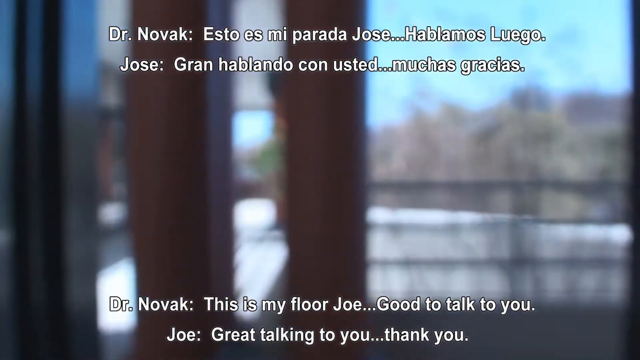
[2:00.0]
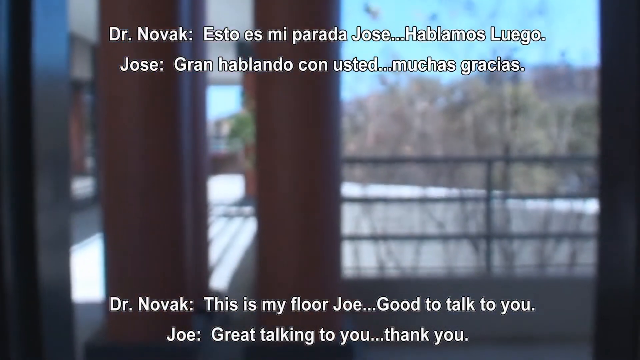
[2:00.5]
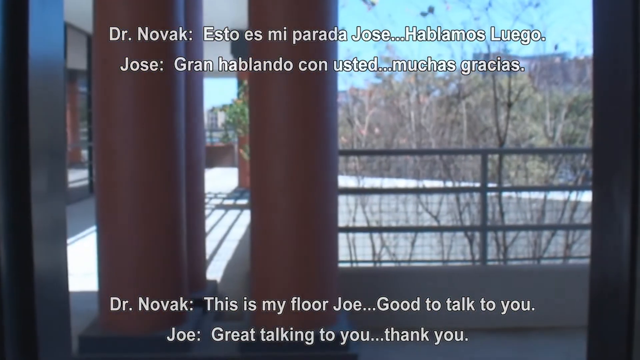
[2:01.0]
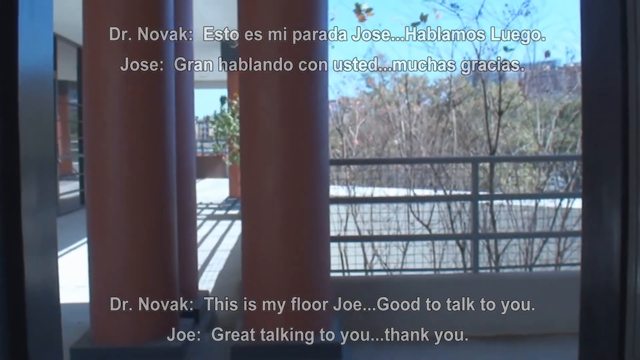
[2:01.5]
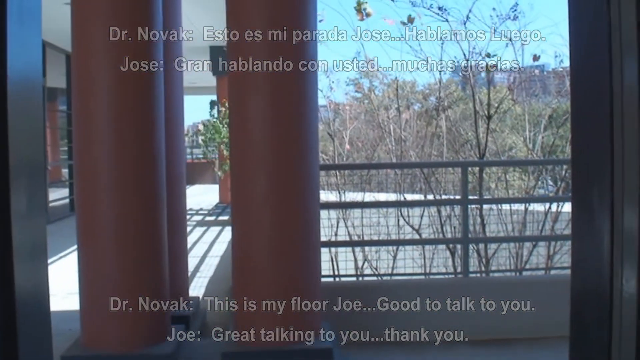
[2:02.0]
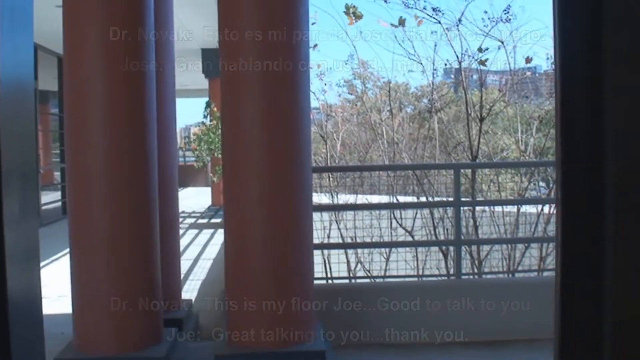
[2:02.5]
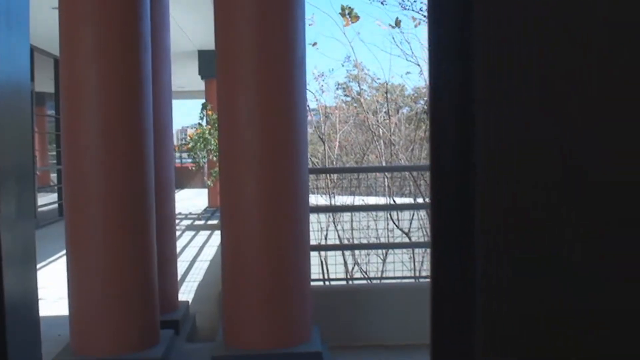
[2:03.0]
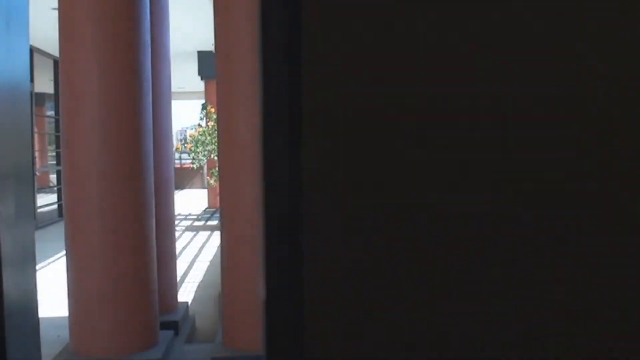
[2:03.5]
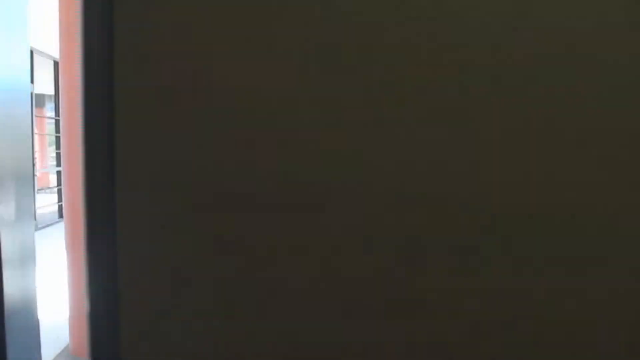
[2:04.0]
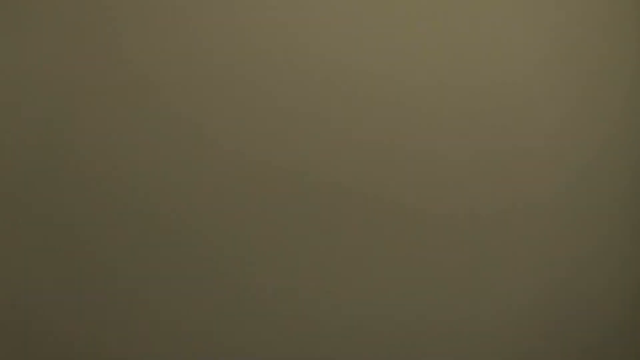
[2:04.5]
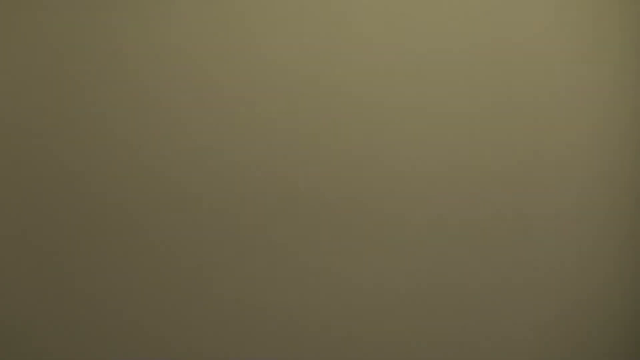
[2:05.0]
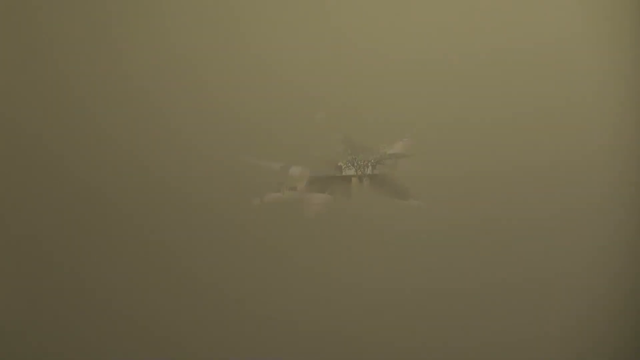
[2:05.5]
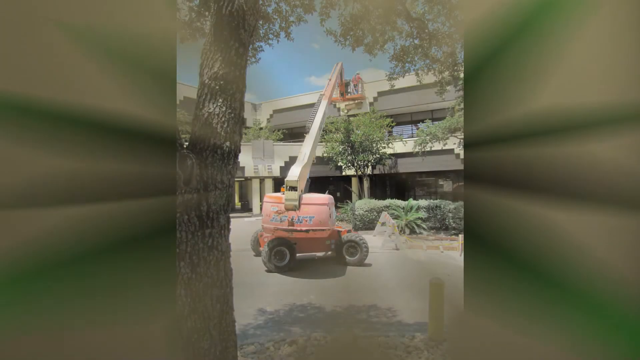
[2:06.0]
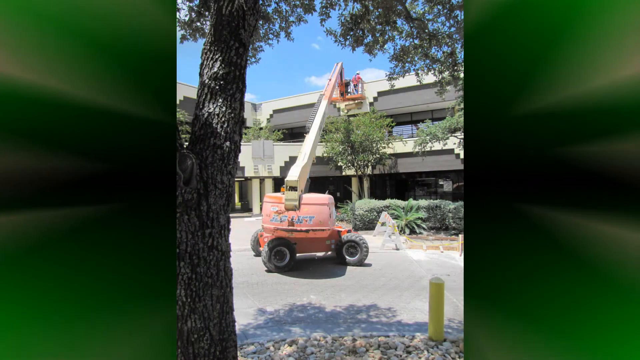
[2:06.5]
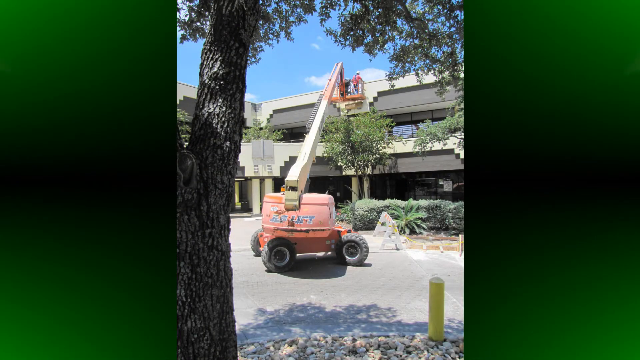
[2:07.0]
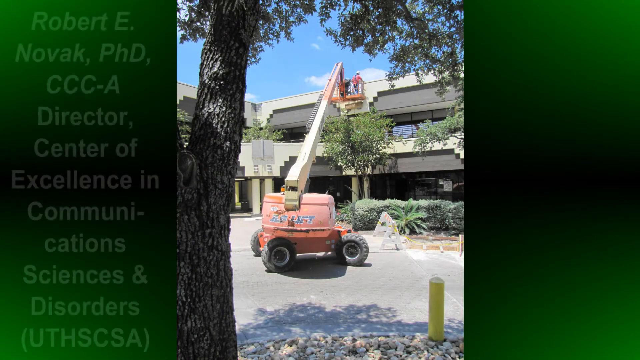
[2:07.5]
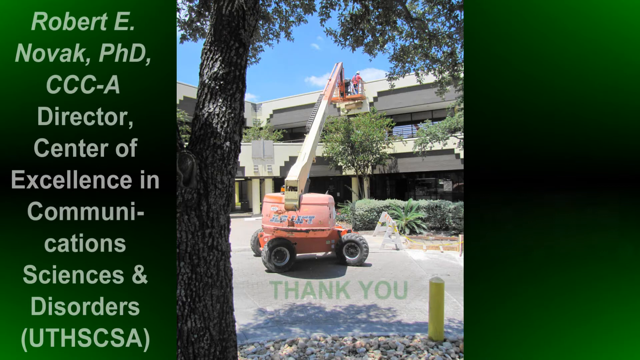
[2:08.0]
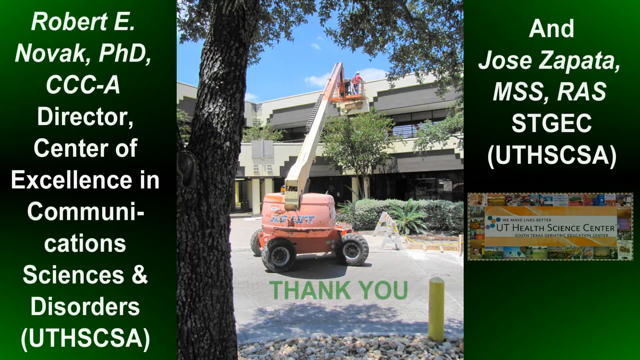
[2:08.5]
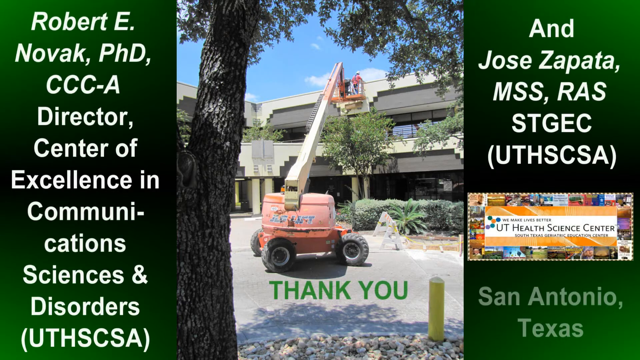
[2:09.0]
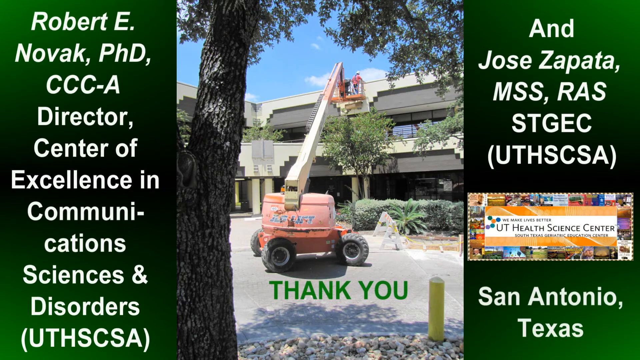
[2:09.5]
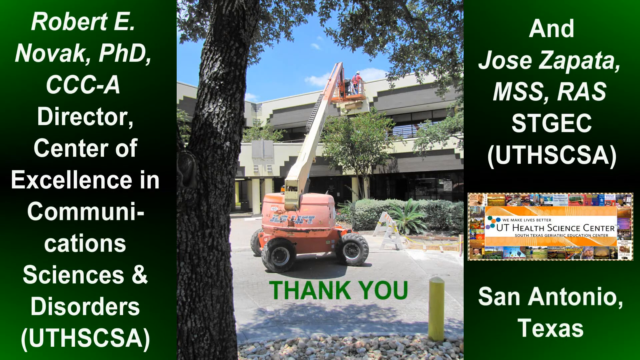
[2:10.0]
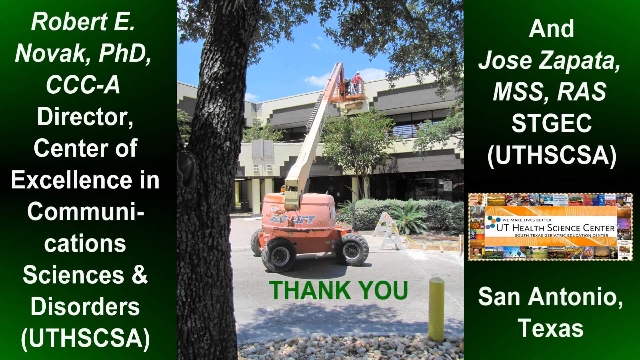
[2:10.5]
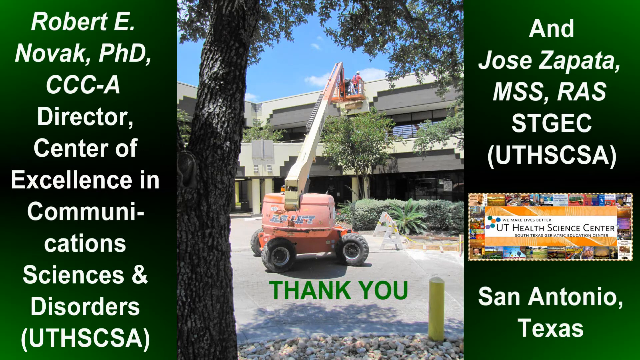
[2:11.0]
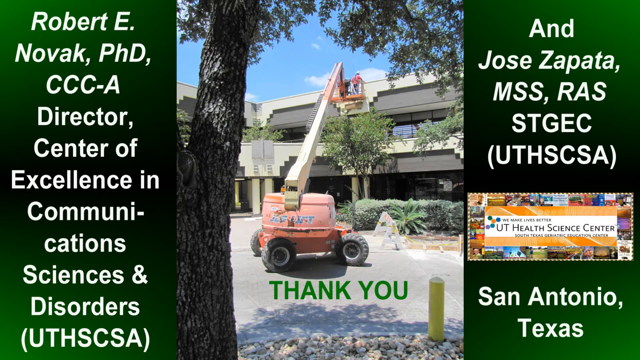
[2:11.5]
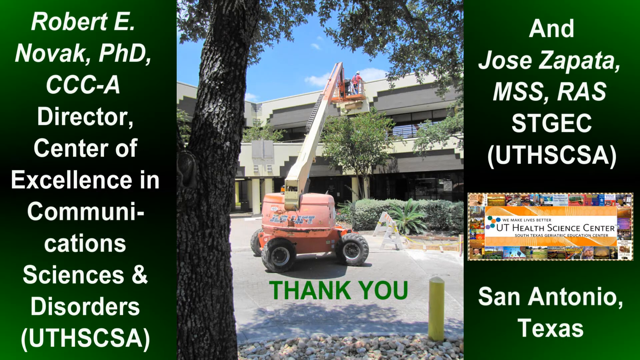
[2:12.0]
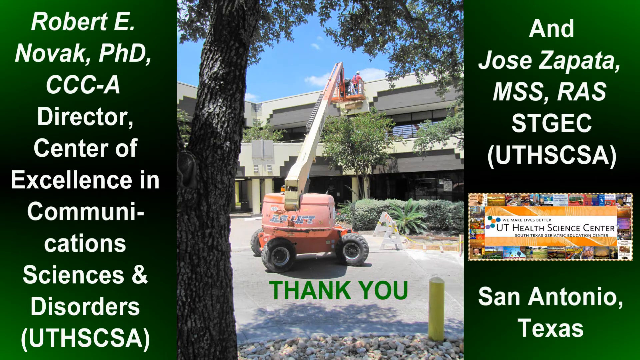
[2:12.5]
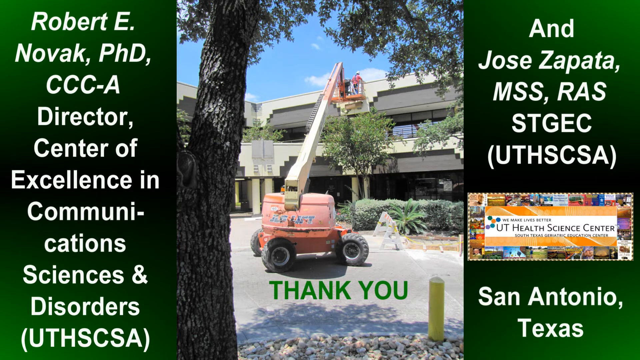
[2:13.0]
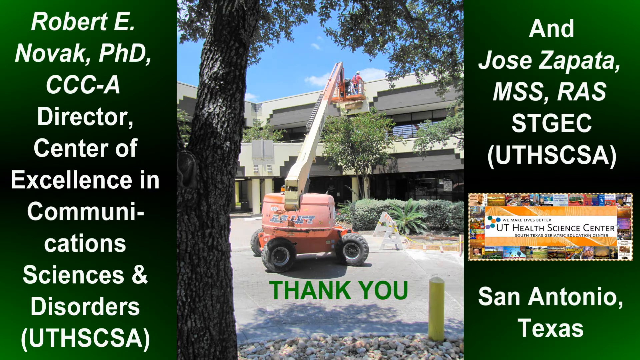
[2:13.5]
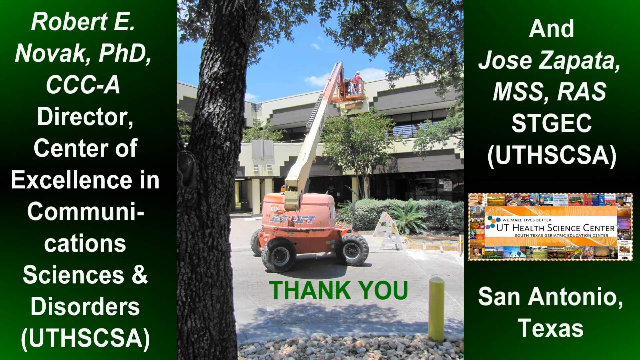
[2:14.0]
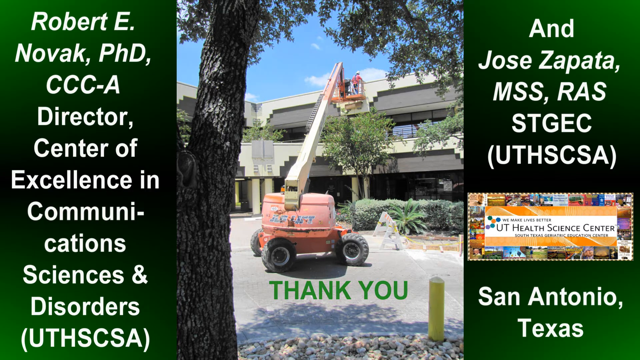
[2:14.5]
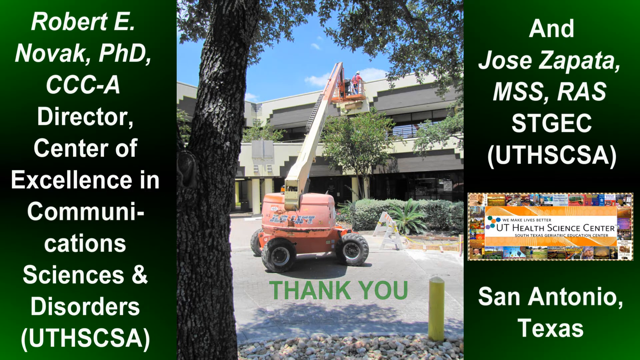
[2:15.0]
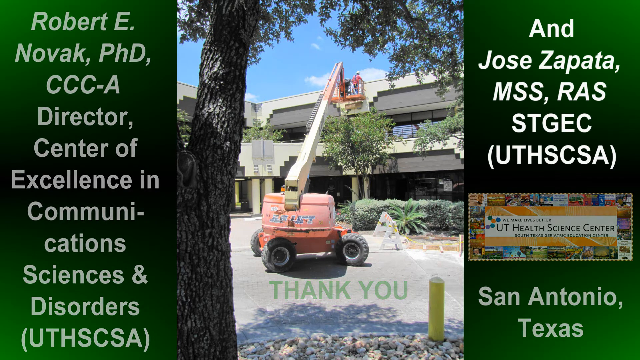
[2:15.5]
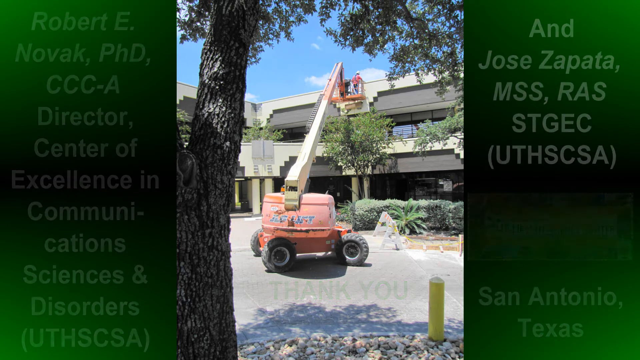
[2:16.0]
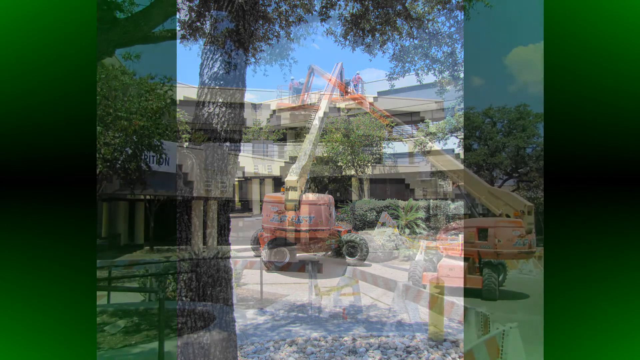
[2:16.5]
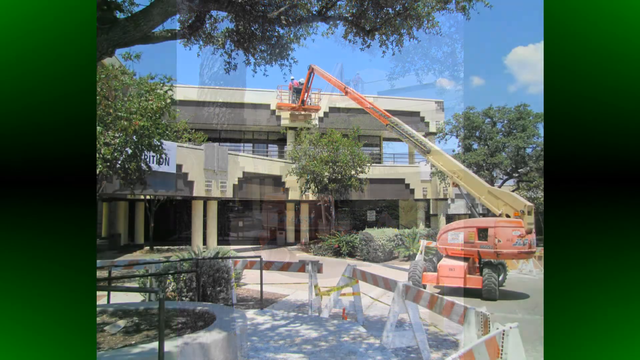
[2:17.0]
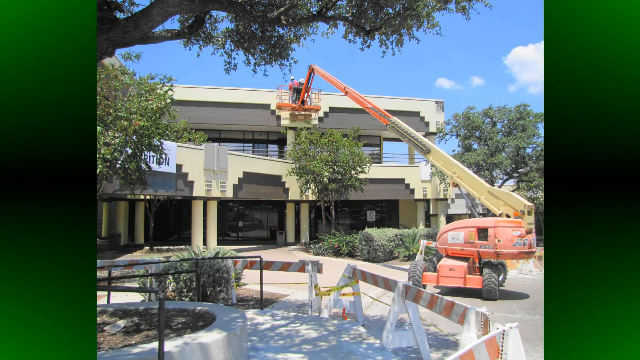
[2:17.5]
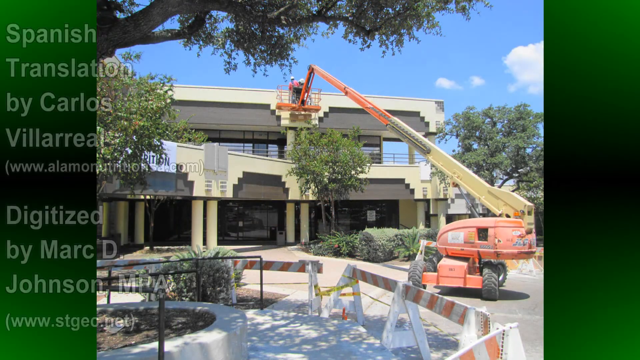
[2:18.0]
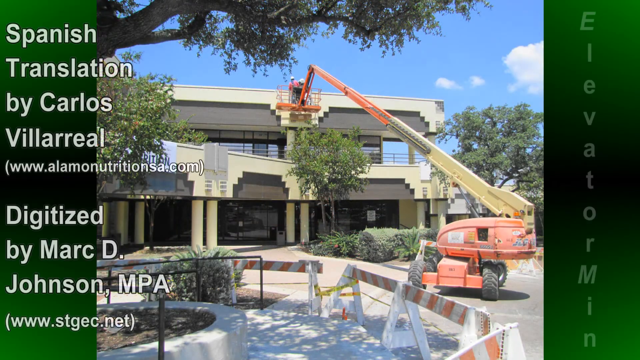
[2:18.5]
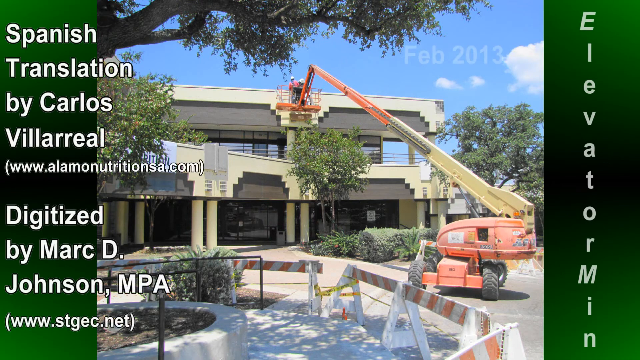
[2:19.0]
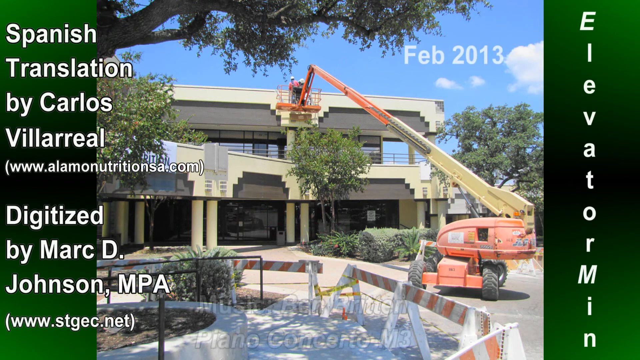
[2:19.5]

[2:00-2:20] Dr. Novak's words appear in subtitles: "This is my floor, Joe. Good to talk to you." Joe answers "great talking to you. Thank you." Orange columns are visible at the elevator, and leaves fall through the air. The elevator closes. Later, credits show "Robert E. Novak, Ph.D., CCCA Director, Center of Excellence in Communication Science and Disorders" on the left with a green background, and on the right "Jose Zapata, MMS, ERAS, STGEC, San Antonio, Texas". The text shows this is UT Health Science Center. Footage then shows how the video was filmed: an orange machine with a staircase, with a yellow handle. Another shot from a different angle shows that the location is a mall.